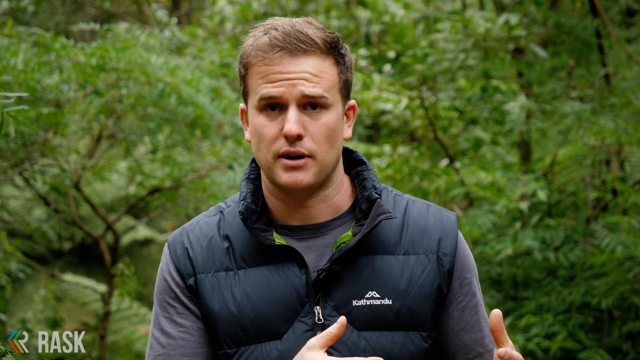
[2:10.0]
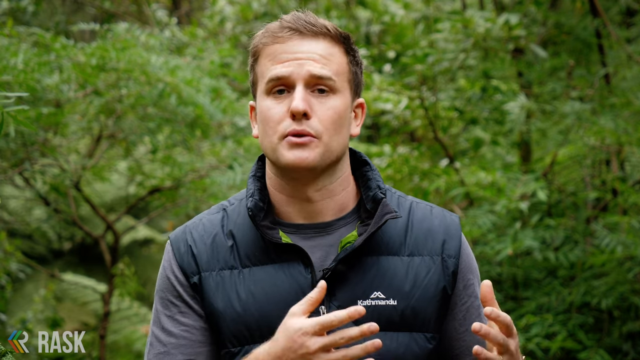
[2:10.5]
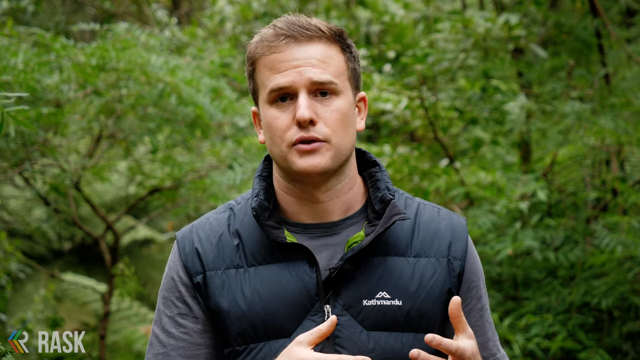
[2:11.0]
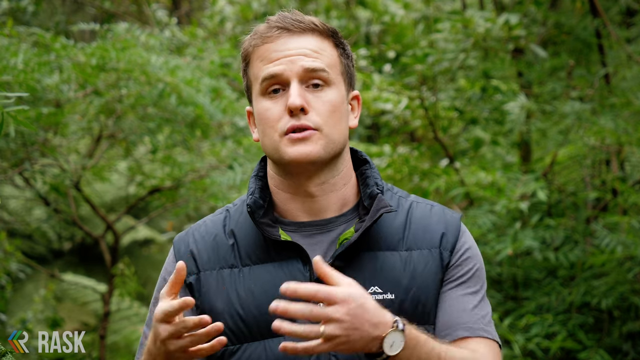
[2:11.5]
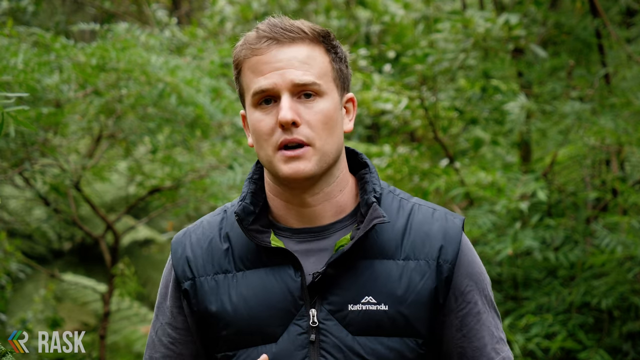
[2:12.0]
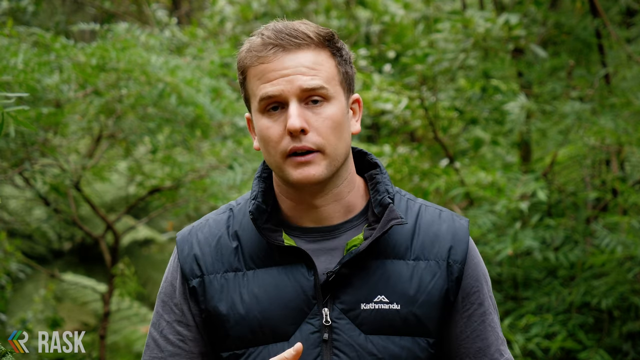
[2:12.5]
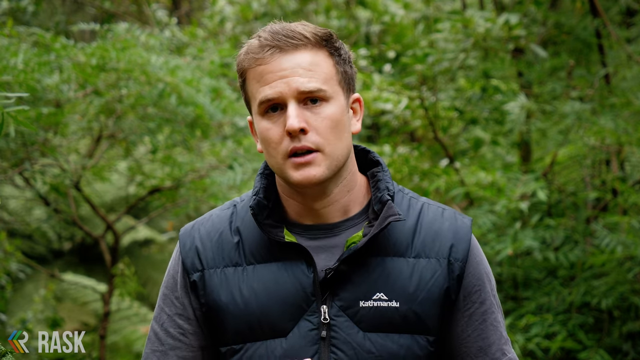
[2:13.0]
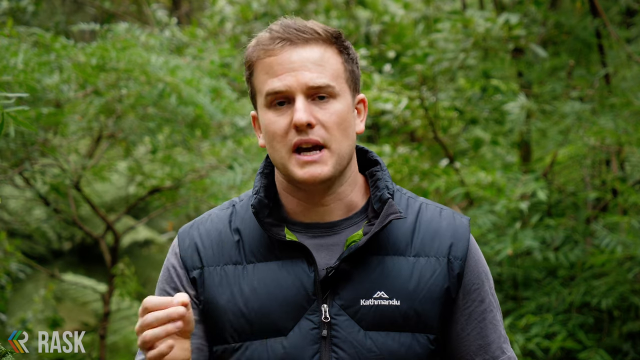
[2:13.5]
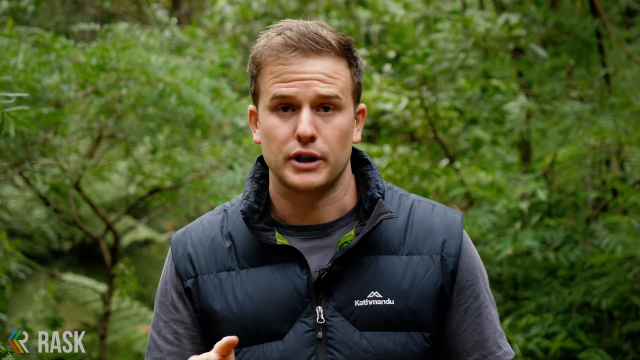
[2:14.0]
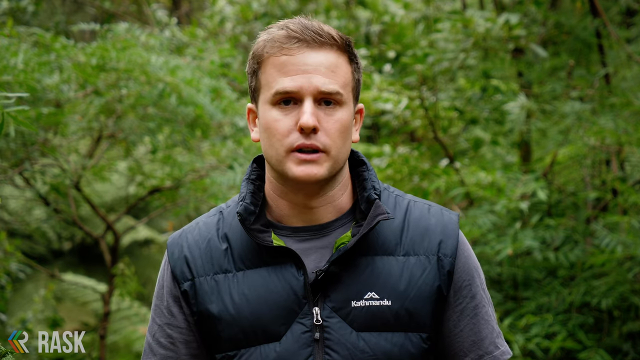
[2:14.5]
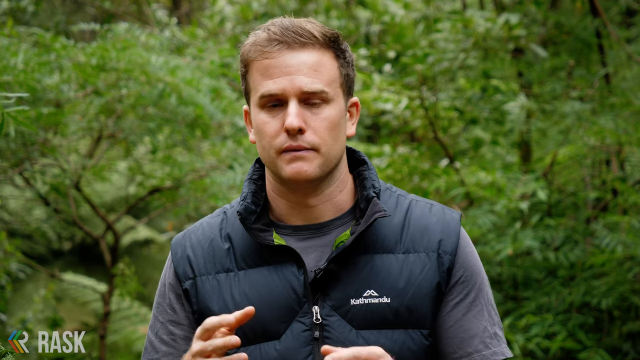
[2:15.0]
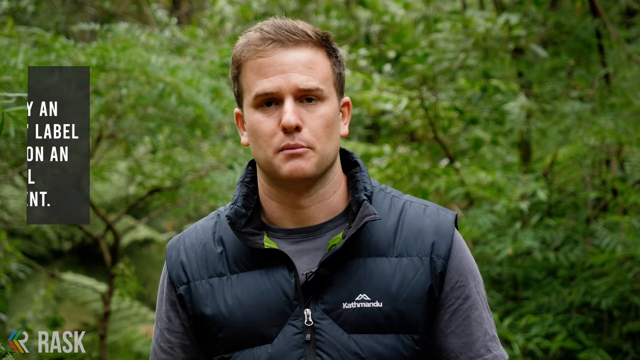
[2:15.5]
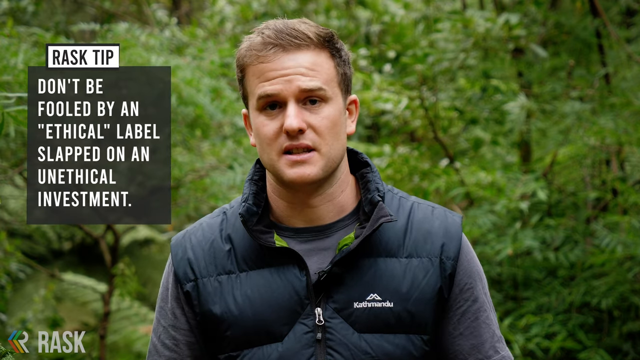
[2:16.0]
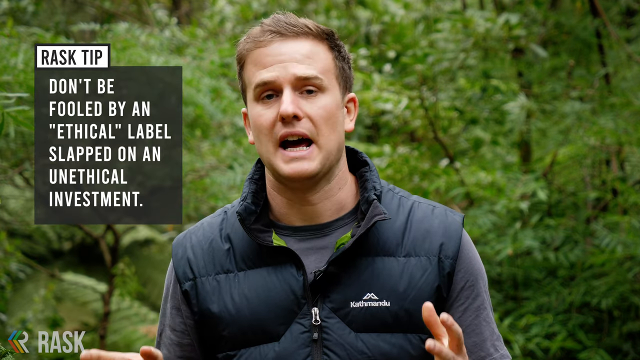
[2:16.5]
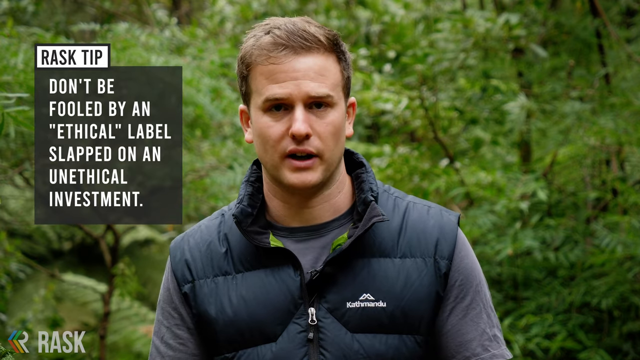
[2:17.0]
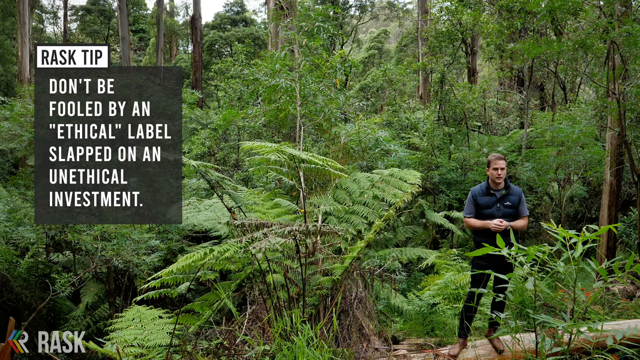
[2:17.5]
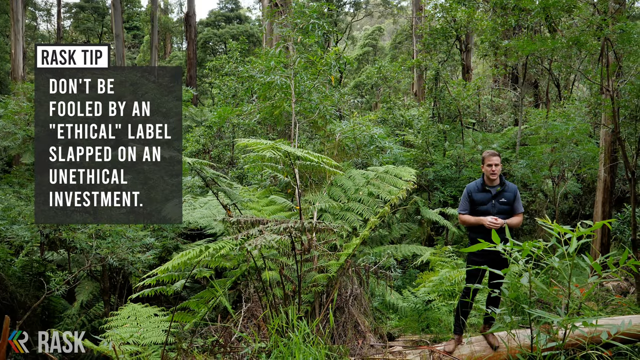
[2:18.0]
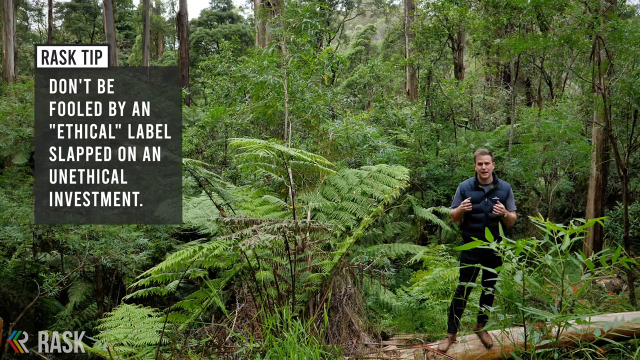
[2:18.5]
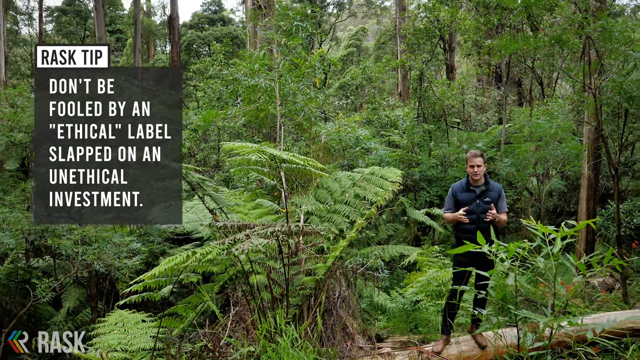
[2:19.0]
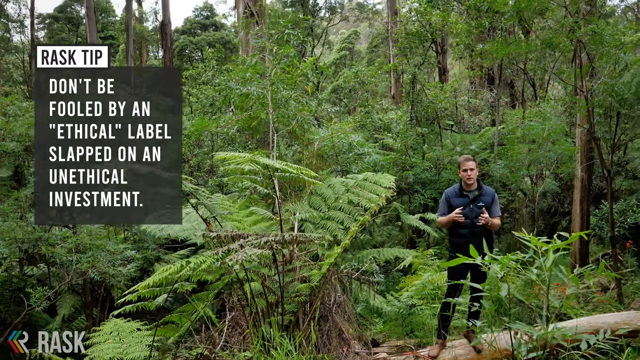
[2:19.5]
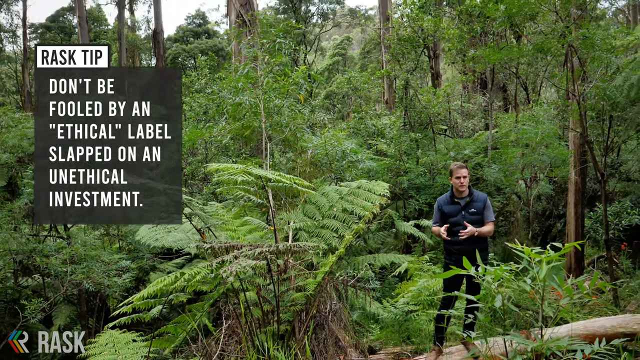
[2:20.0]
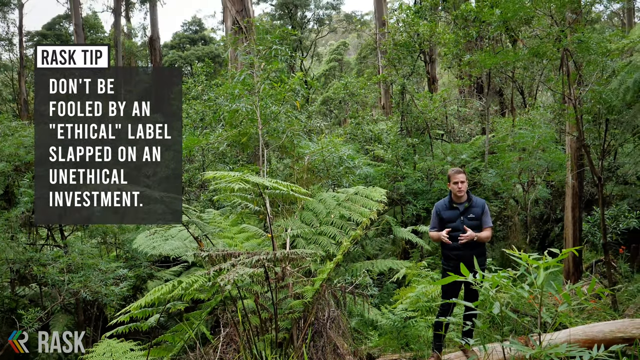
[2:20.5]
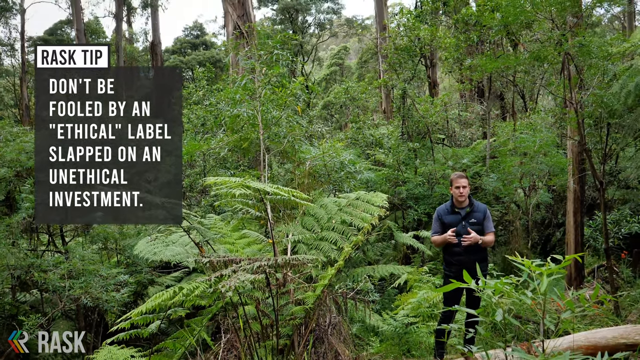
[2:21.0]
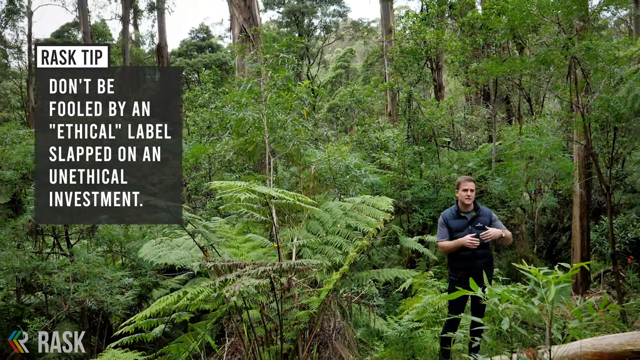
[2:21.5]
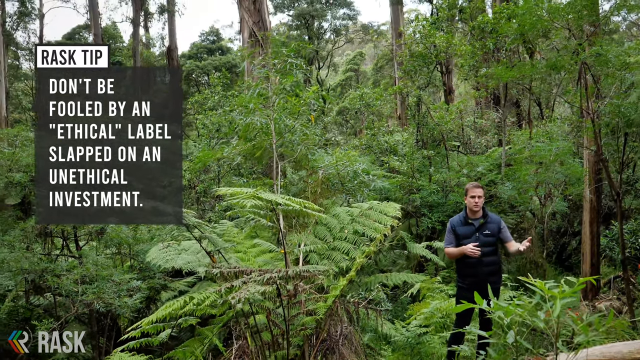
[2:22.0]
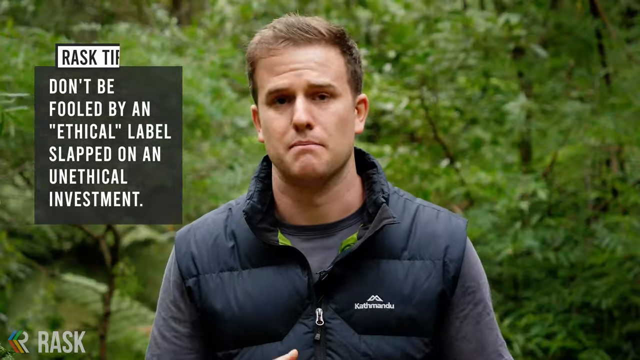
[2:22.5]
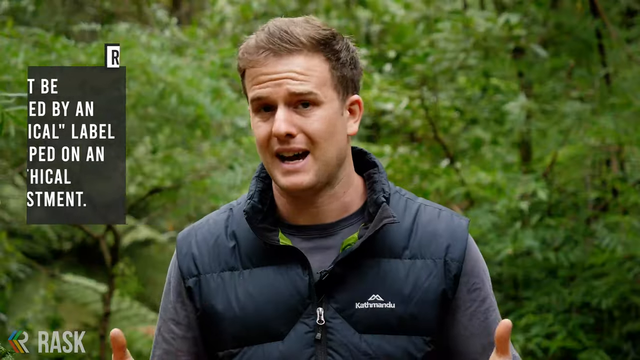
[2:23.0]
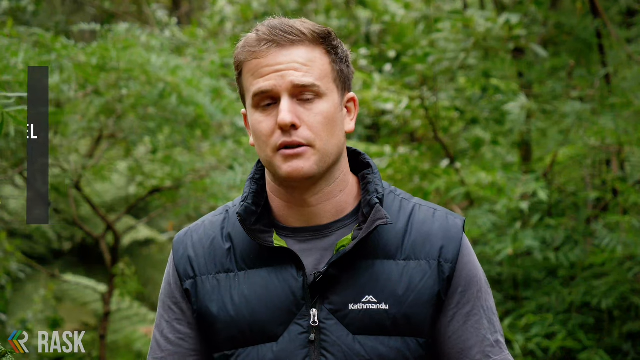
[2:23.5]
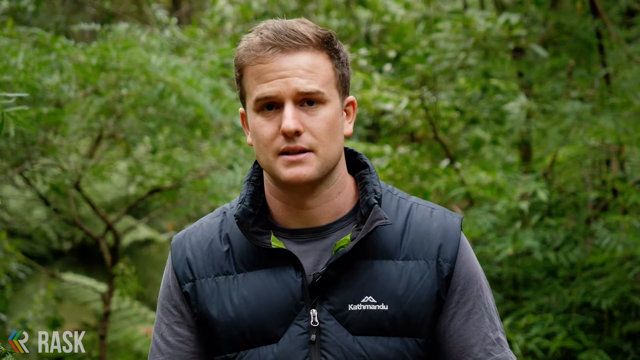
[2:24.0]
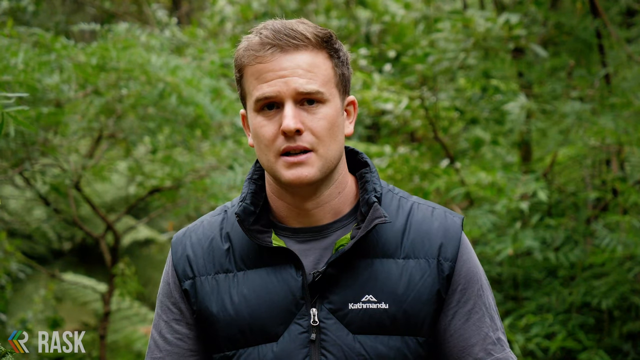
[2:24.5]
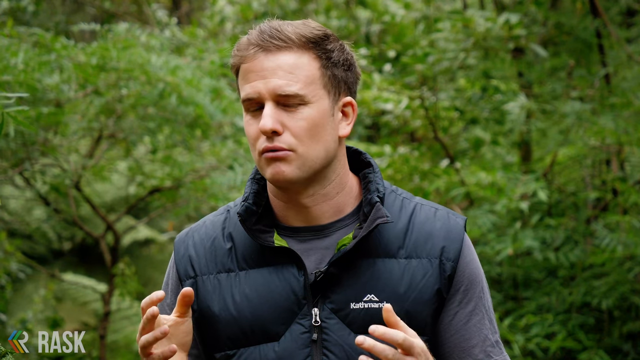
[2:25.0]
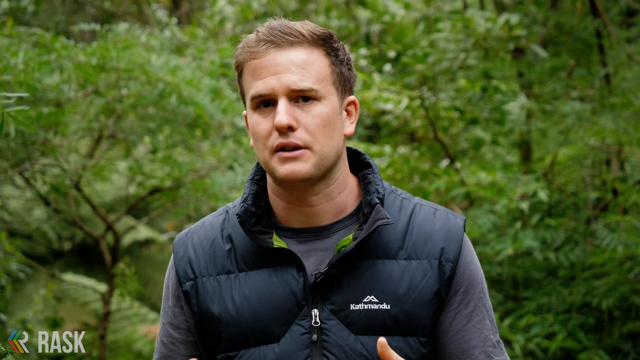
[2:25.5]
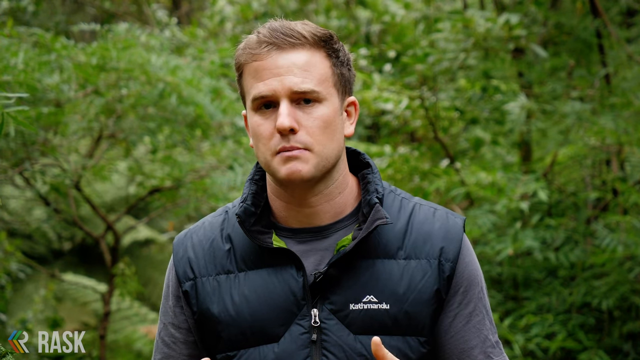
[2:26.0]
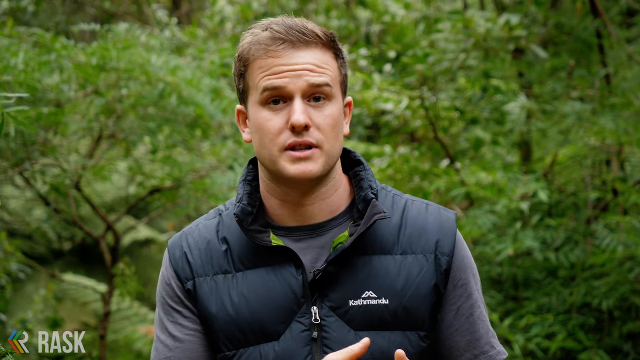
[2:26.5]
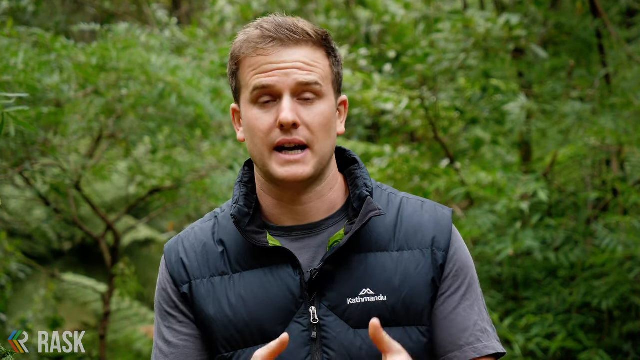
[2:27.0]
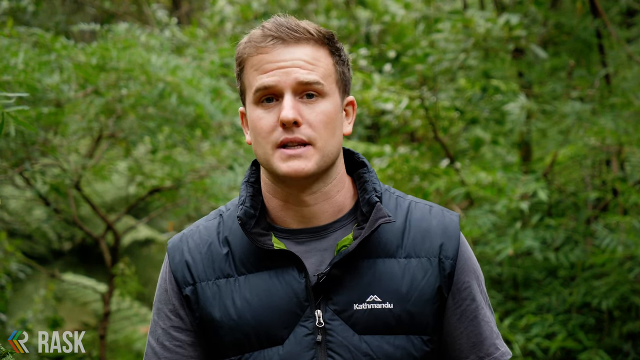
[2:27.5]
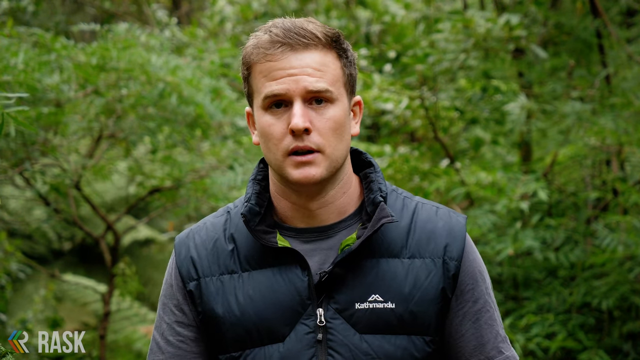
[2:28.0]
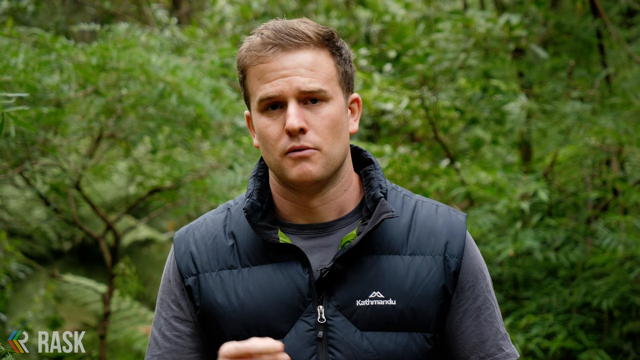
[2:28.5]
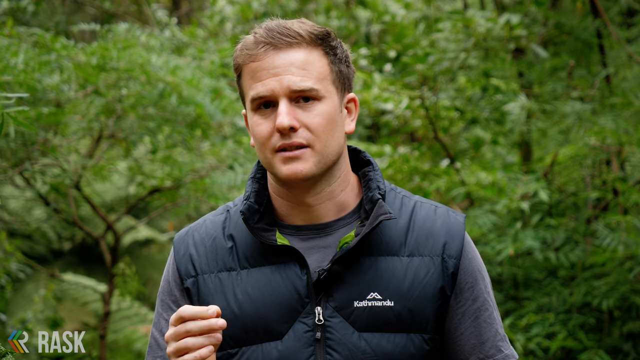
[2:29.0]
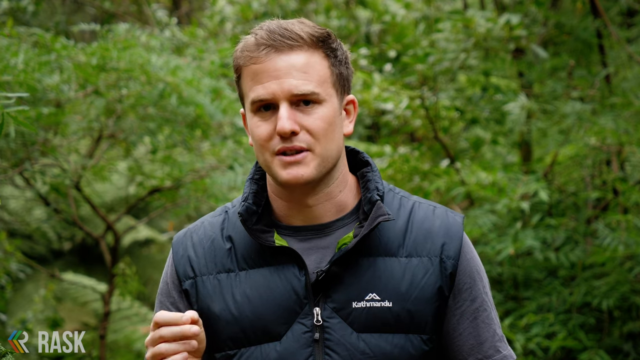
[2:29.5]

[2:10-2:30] The coach is speaking about investment. Writing on the screen says "Don't be fooled by an ethical label slapped on an ethical investment." A full view shows the man standing on a fallen tree as he explains his point.